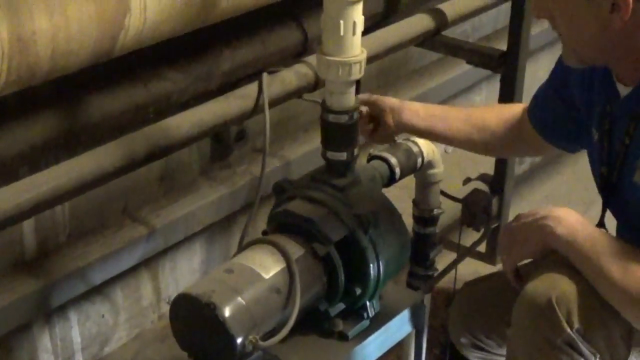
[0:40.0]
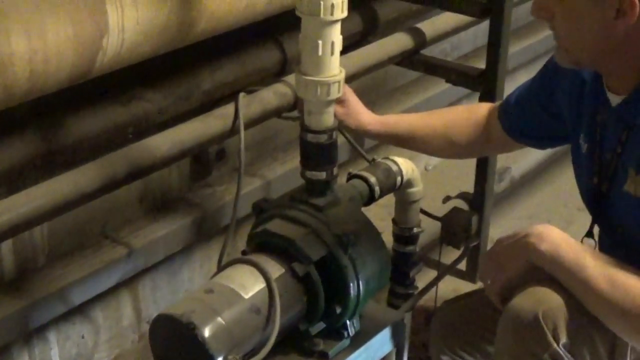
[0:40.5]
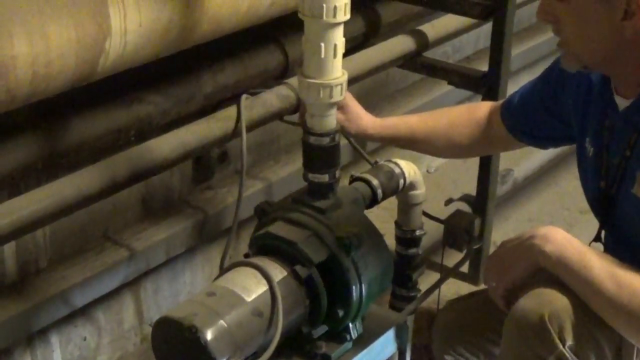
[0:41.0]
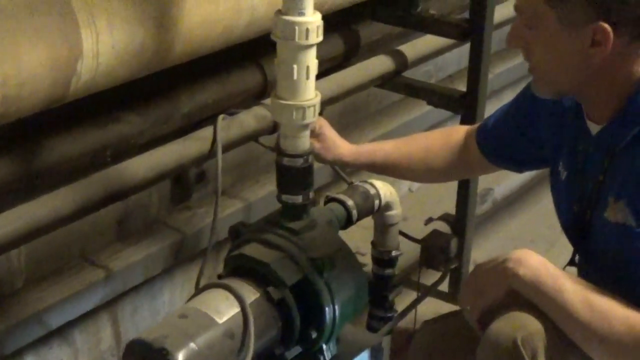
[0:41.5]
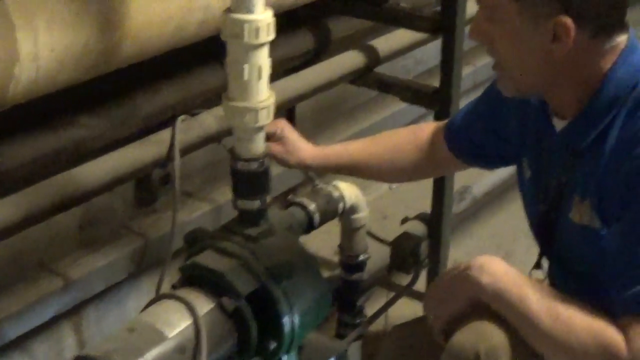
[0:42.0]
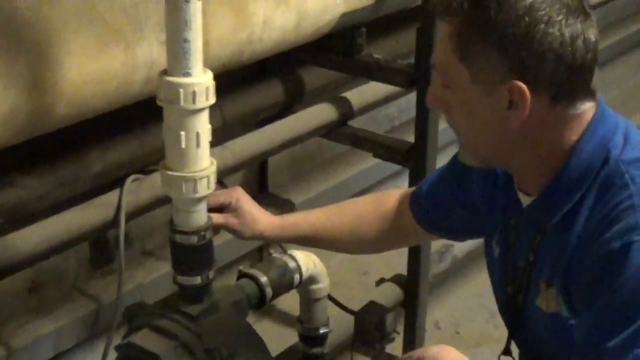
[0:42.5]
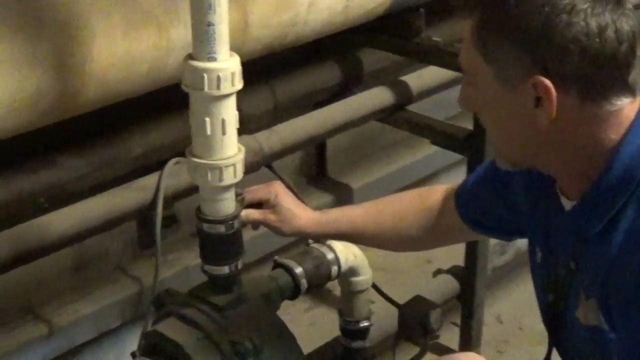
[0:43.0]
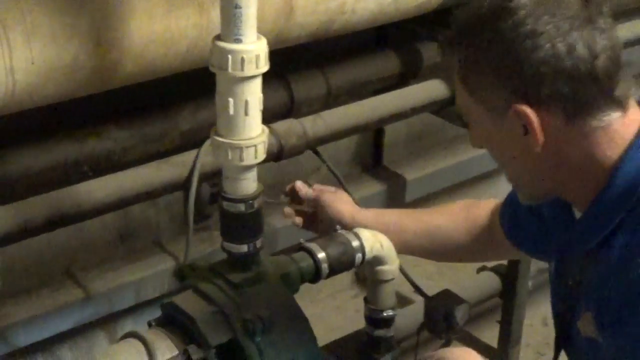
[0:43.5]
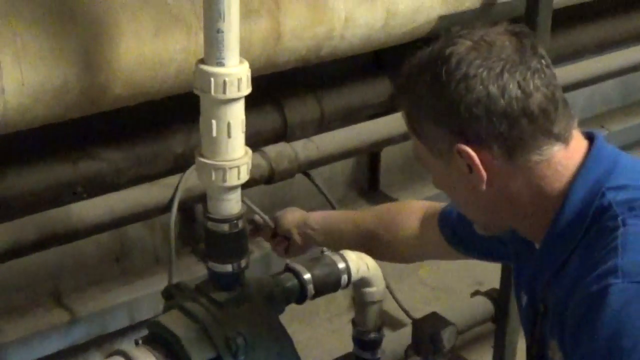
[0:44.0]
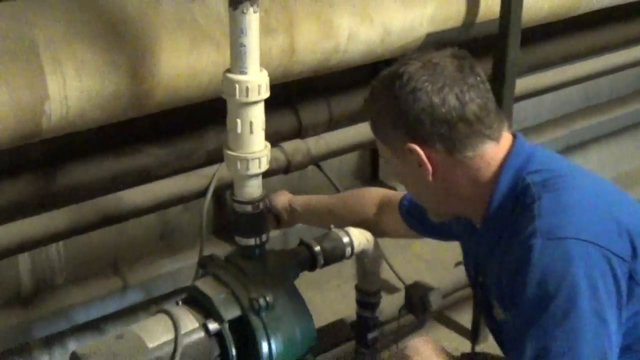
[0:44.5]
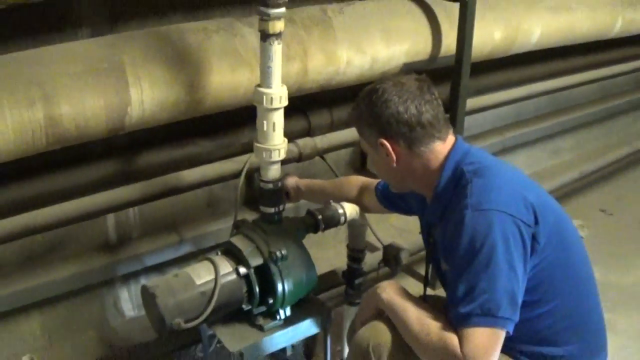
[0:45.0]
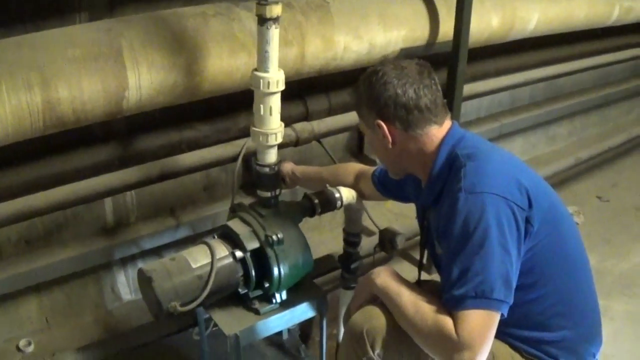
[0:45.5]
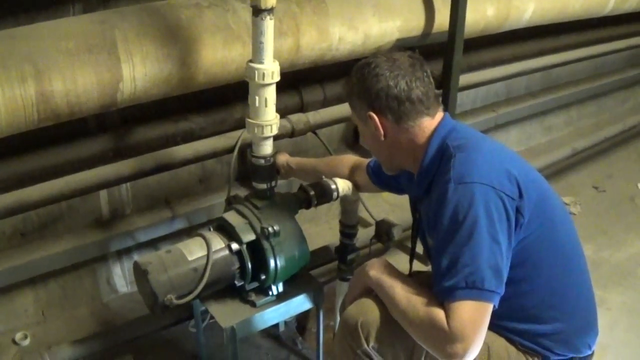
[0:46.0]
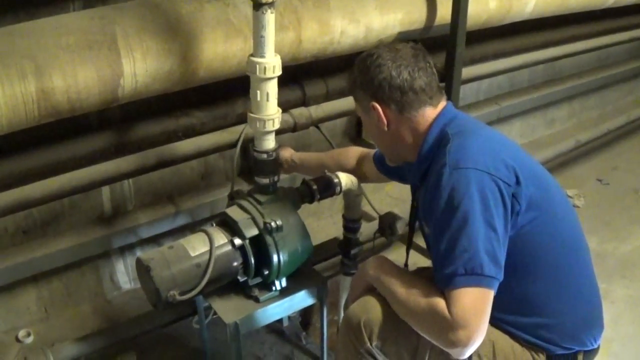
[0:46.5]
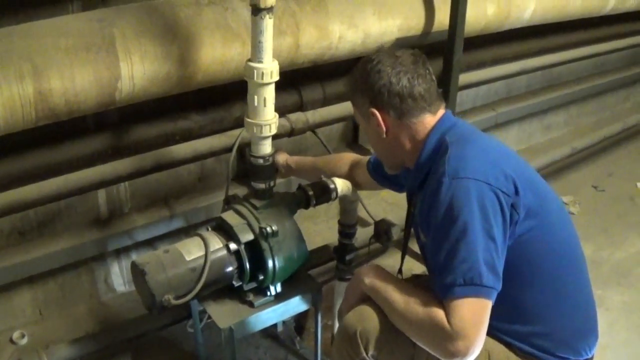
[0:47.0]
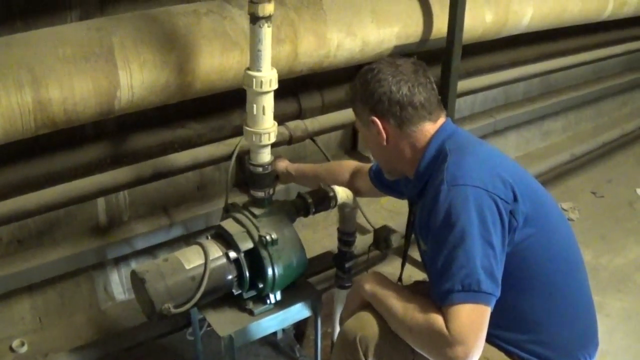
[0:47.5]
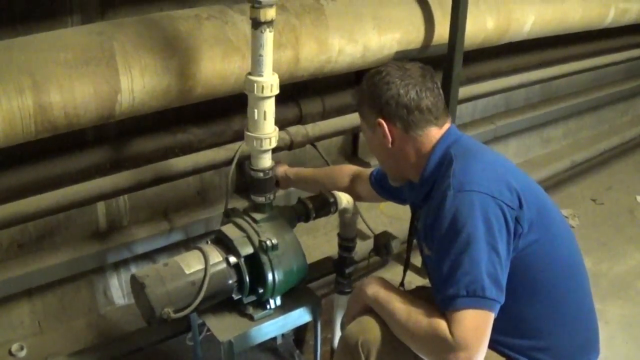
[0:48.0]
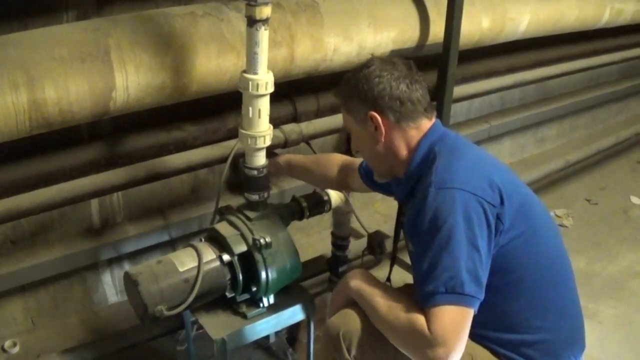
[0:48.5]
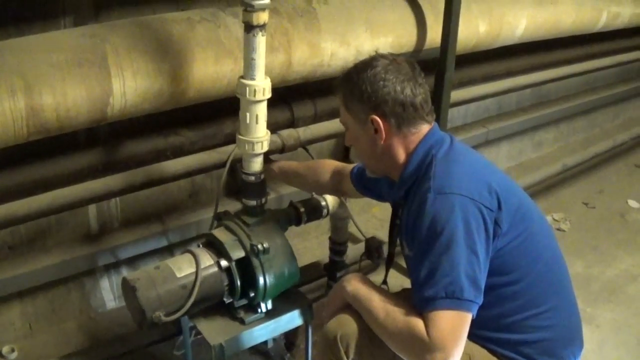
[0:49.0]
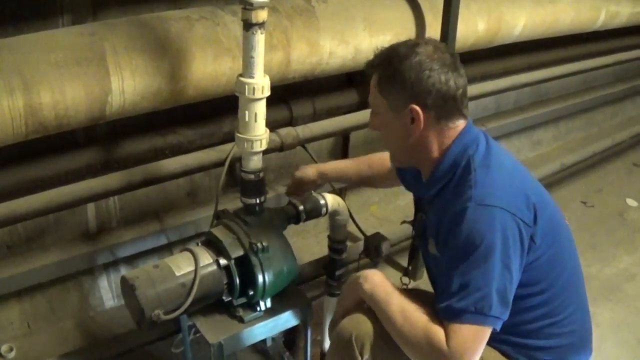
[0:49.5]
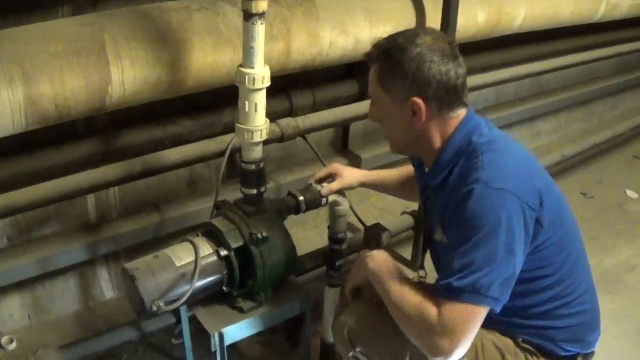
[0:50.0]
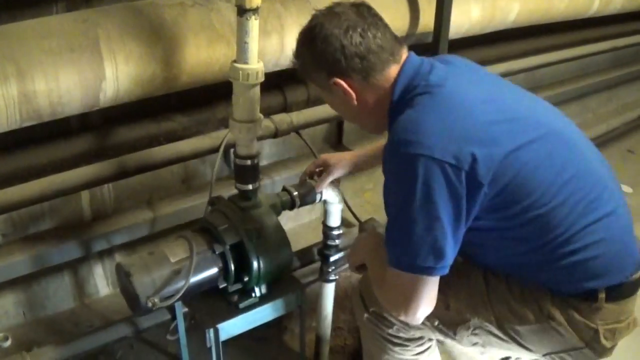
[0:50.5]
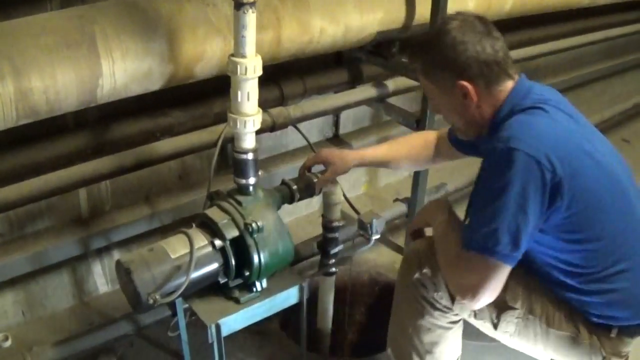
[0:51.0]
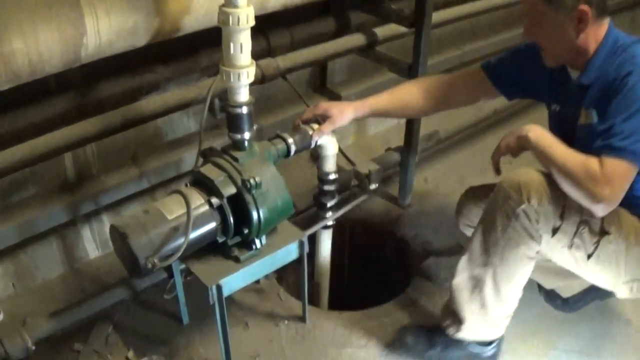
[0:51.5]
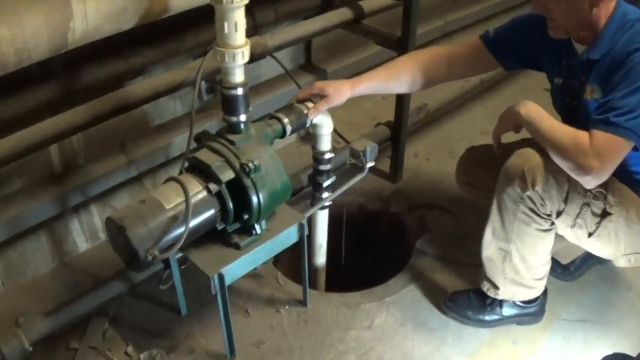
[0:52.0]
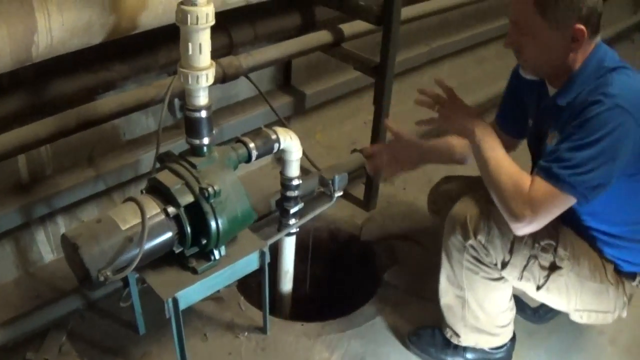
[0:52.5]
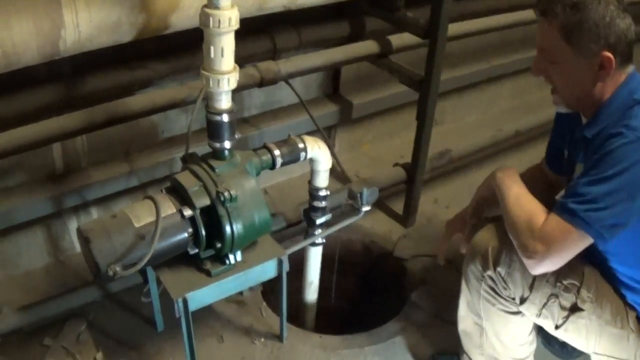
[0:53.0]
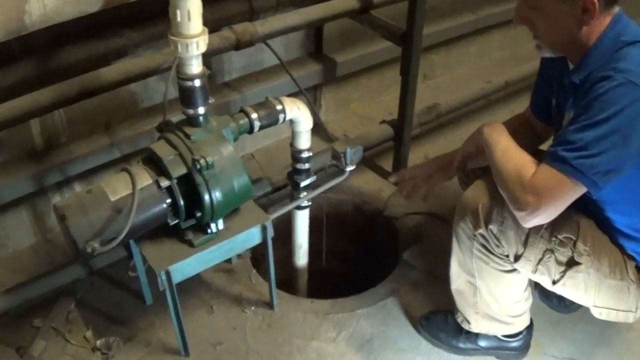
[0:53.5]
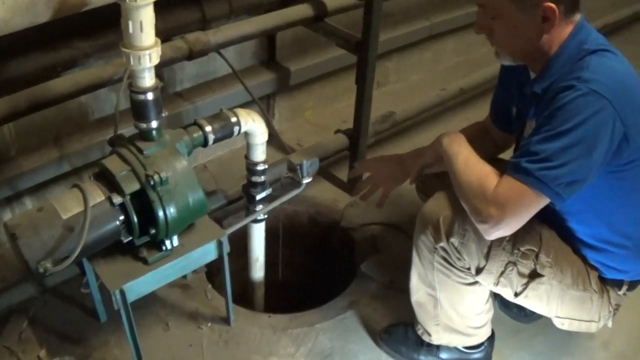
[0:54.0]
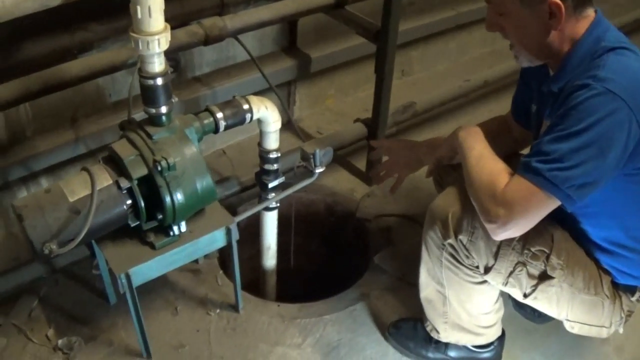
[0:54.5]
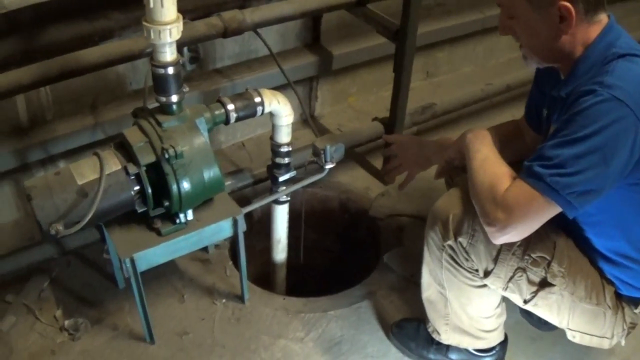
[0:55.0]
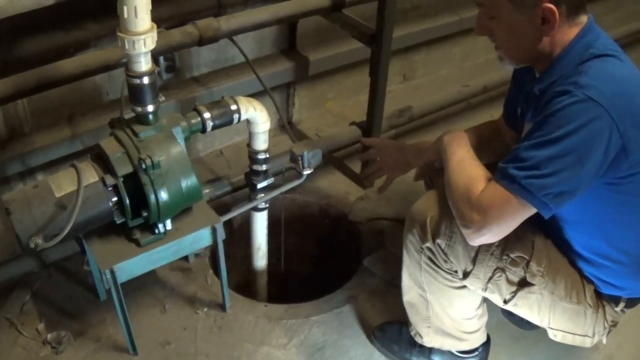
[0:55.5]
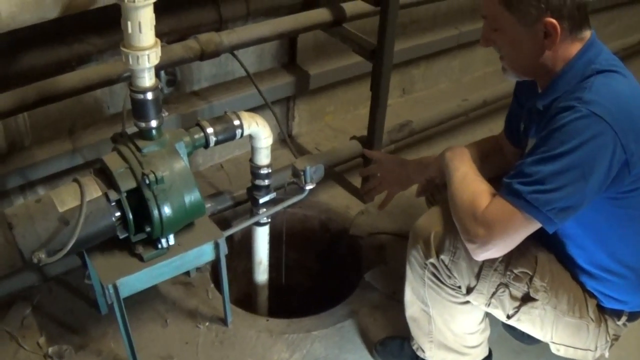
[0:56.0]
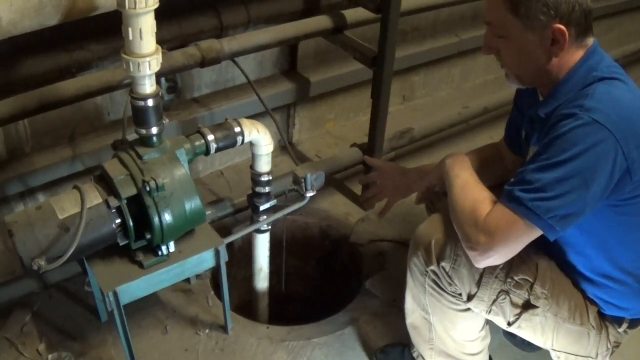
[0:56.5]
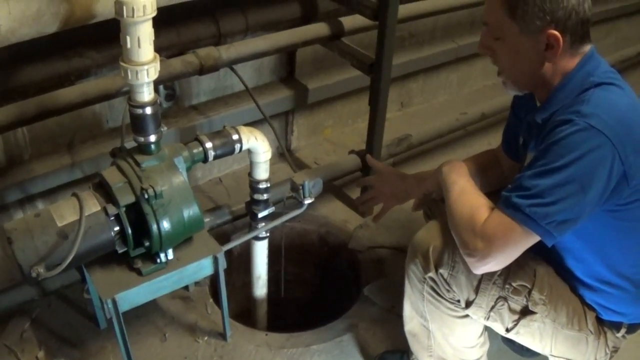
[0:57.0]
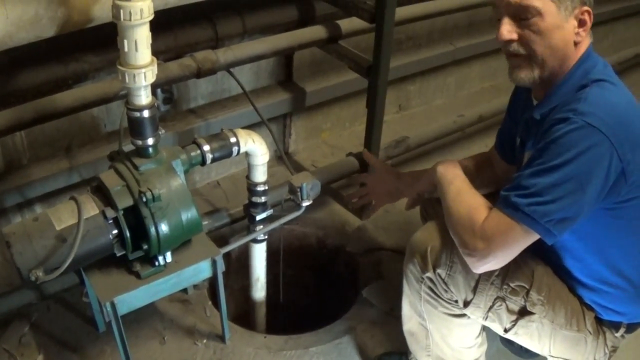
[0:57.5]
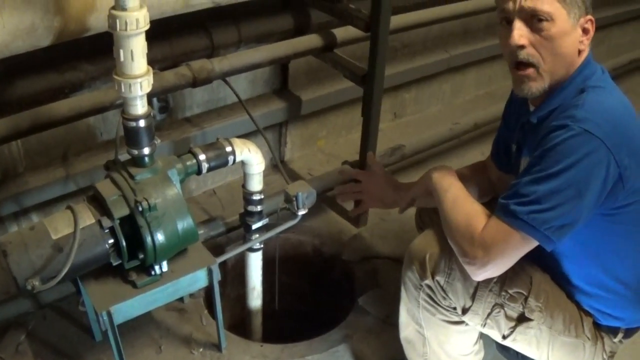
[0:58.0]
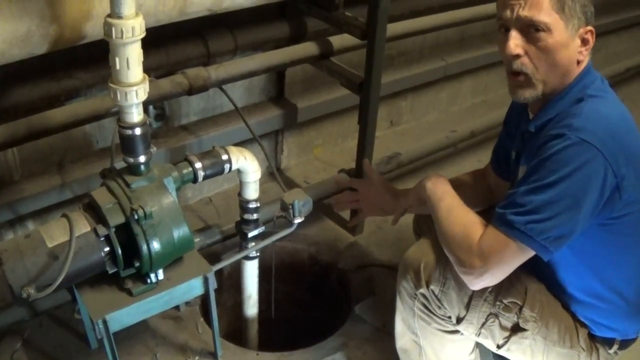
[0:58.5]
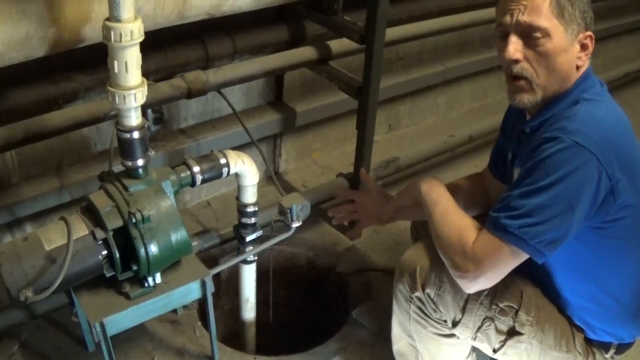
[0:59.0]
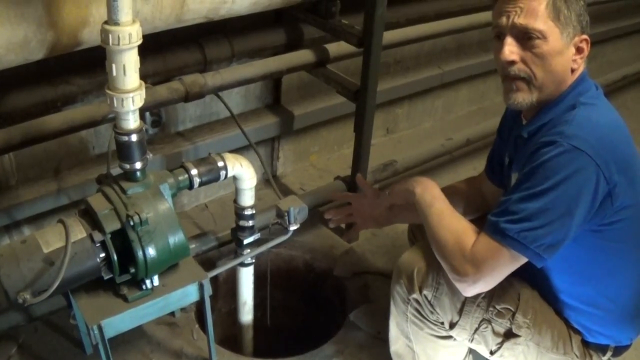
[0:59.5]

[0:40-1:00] The man in the blue t-shirt and khaki pants squats near the pump or motor and looks at the motor. He touches a wire, disconnects it from the socket, then reconnects it, plugging it in and out, while still squatting. There is a hole in the ground with other pipes coming out of it. The pump's motor seems to float in the air or is placed on a table-like structure made of small green metal. The man looks at the hole, pointing at the hole and the pipe. The pipe coming from the hole is white and the connectors are black. The floor is concrete. The man stays there explaining, apparently how water, chemicals, another liquid or air is pumped from one point to another.